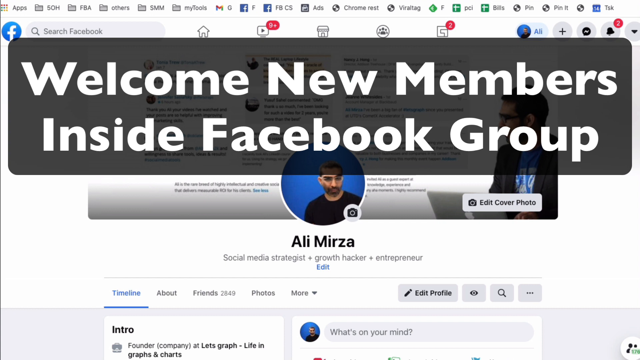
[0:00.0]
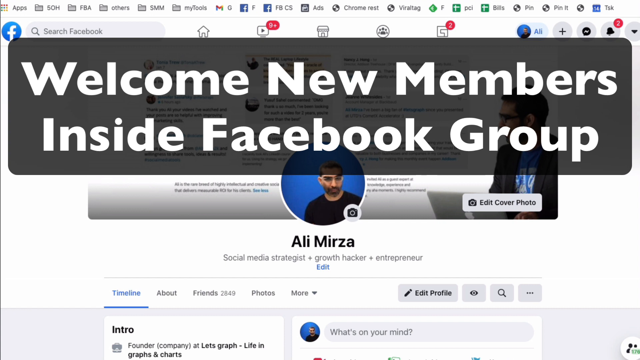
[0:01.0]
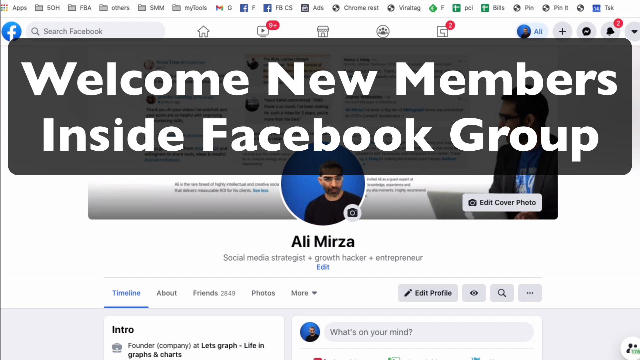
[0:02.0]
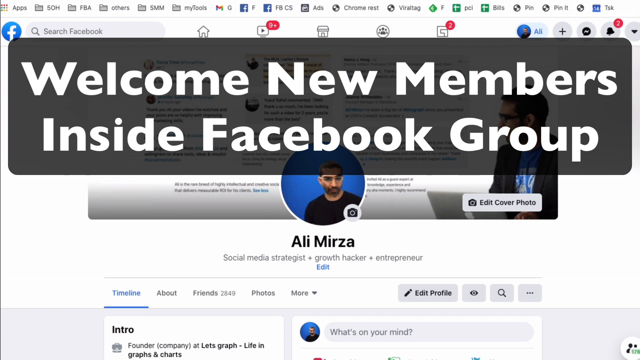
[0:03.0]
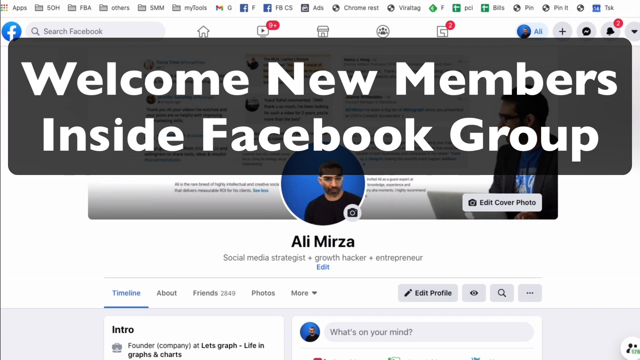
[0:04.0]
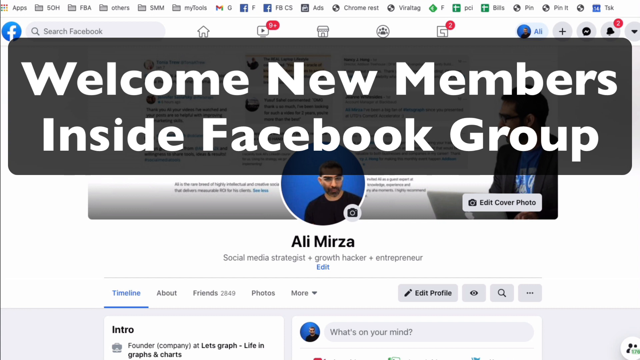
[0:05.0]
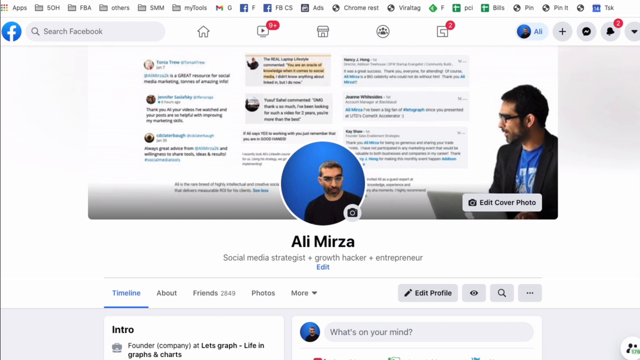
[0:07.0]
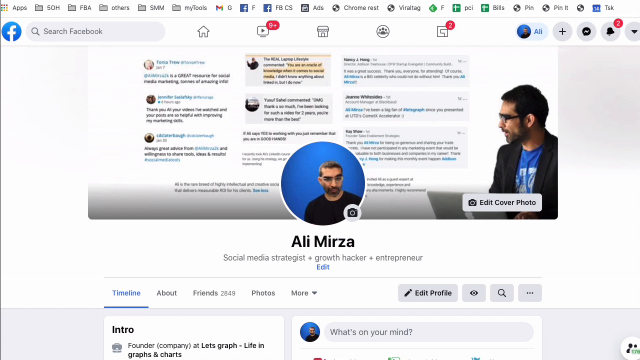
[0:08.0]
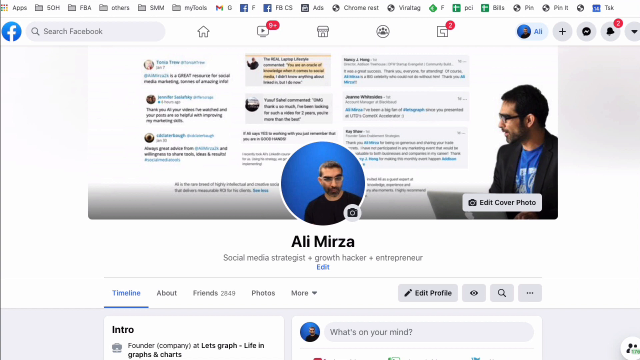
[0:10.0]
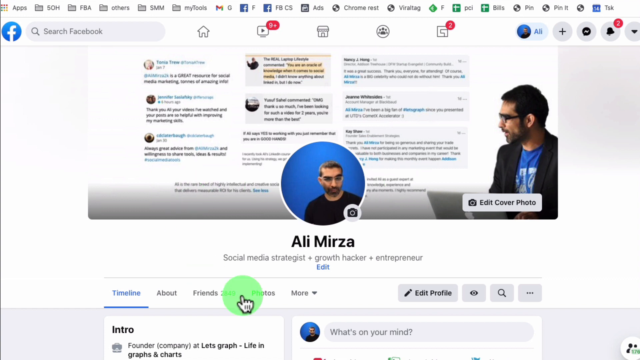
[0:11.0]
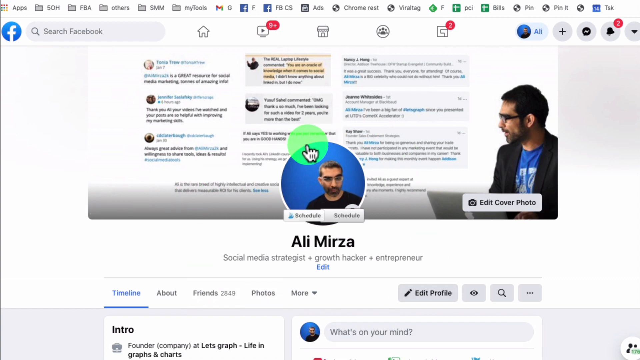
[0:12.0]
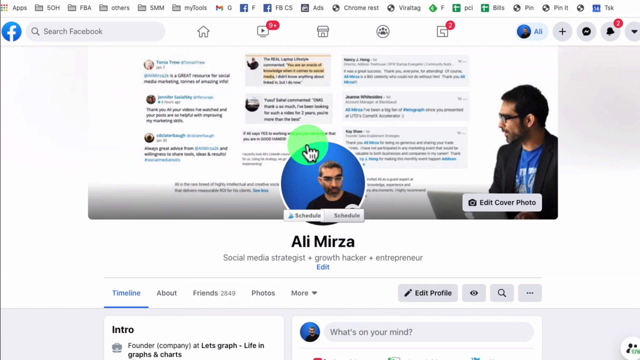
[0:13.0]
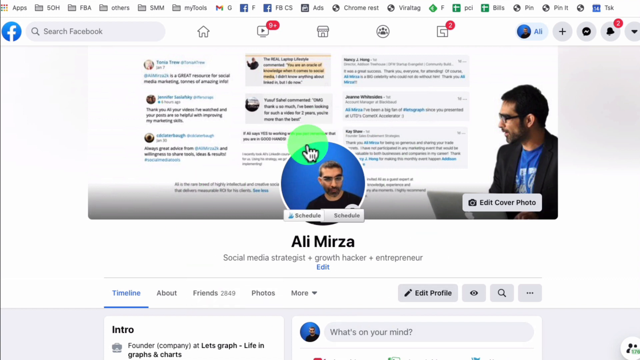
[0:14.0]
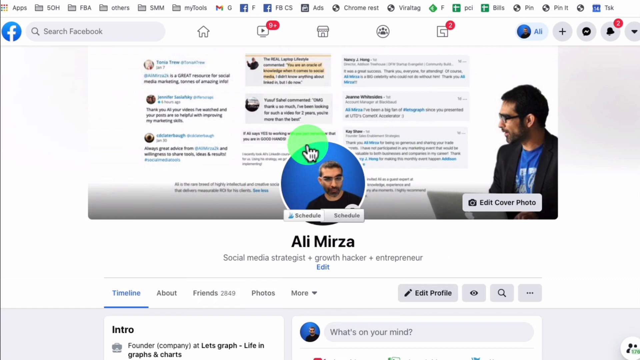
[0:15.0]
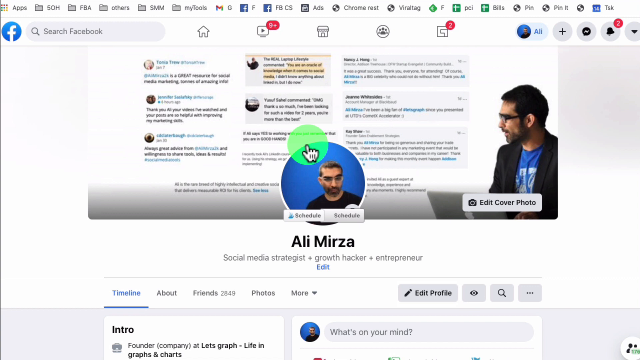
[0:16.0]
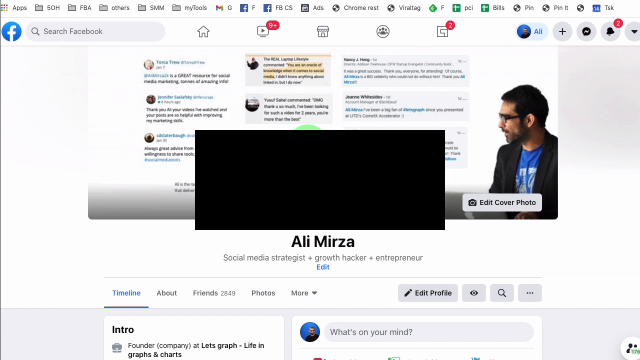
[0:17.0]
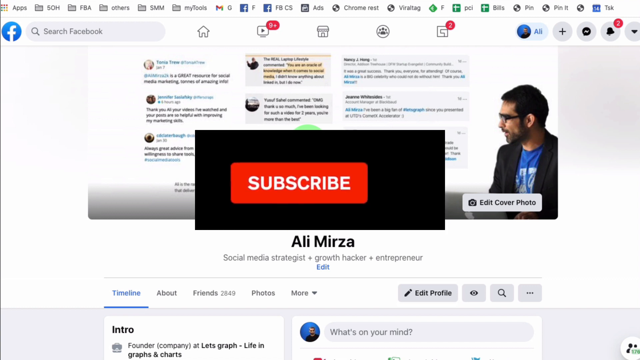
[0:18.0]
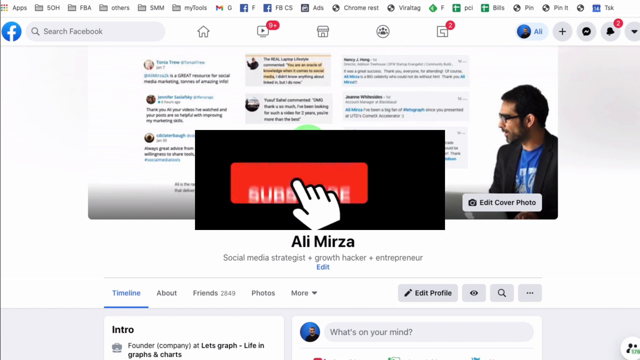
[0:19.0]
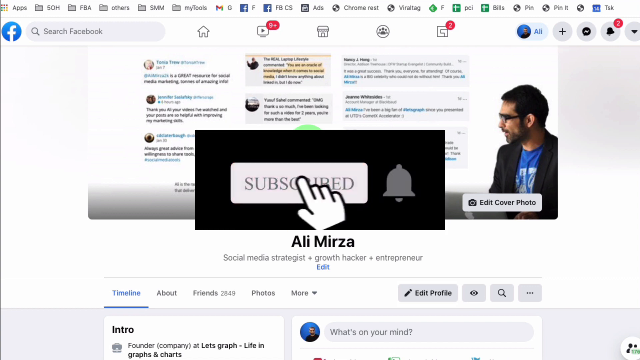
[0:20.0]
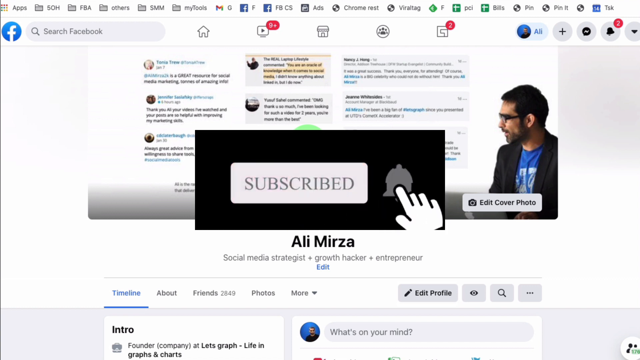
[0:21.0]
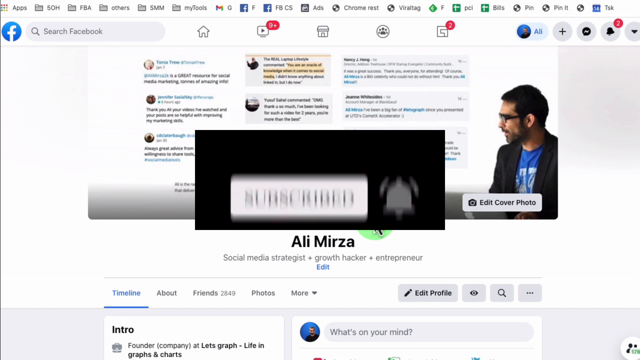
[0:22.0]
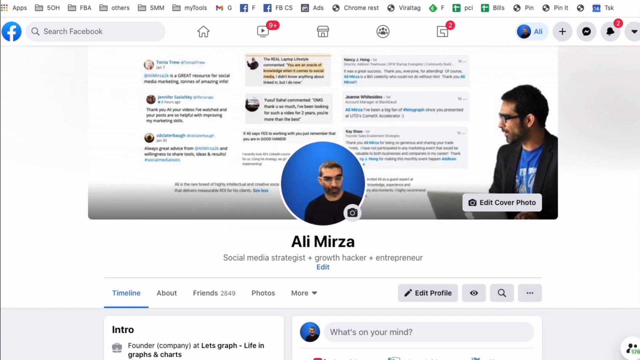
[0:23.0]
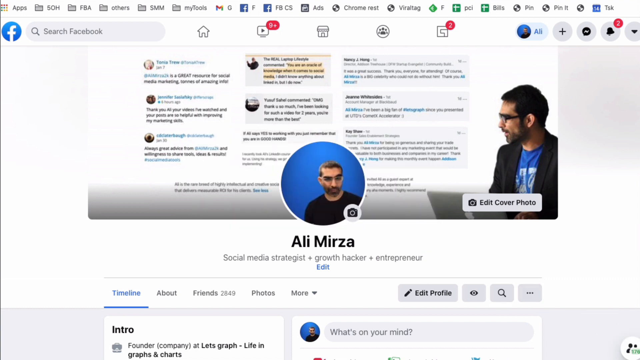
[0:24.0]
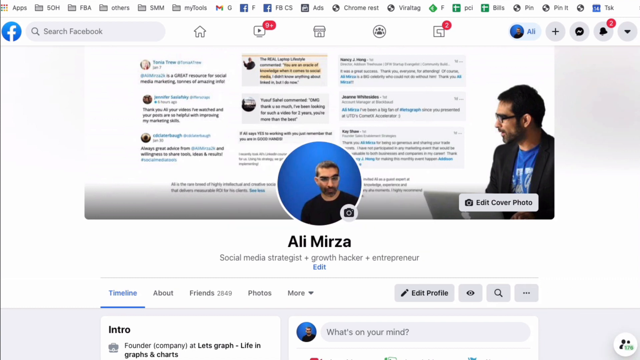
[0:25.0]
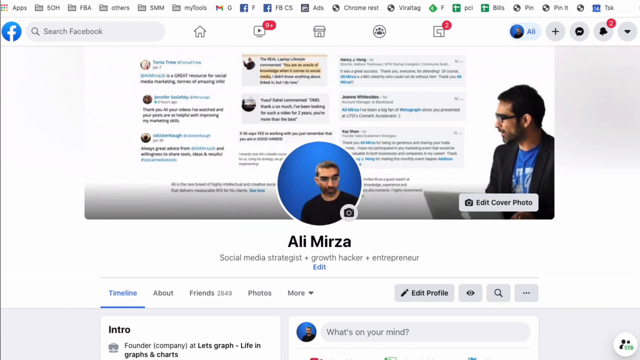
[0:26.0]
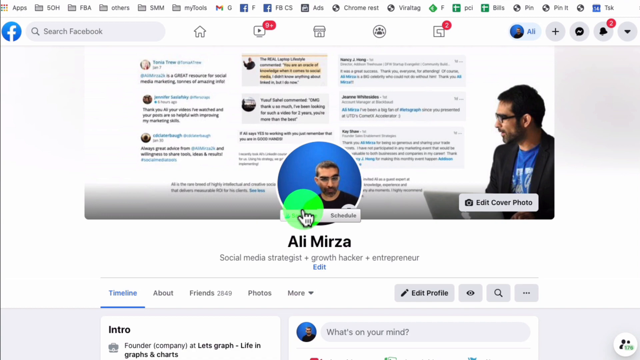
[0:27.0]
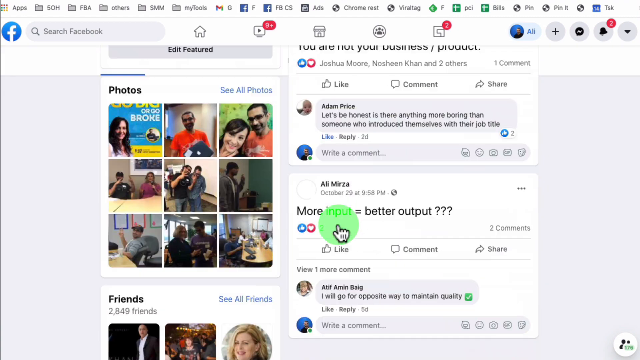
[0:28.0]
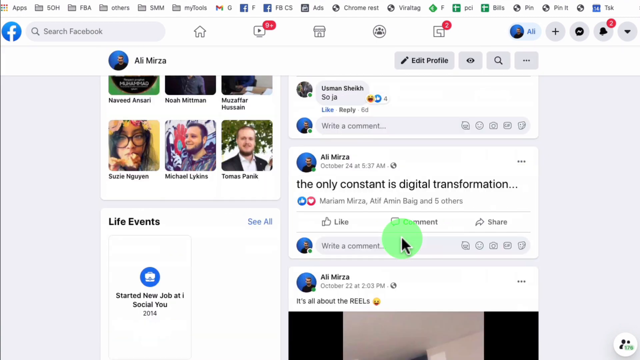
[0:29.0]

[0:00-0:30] A Facebook page shows "welcome new members" to a Facebook group, and there is an option to subscribe. Various pages pop up on this page. There is a picture of a man wearing glasses, a blue t-shirt and a black jacket. Another picture, taken against a blue background, shows him wearing only a black t-shirt. The pages are scrolled down, and other pages come up with names; this page is for a person named Almeza, the owner of the group.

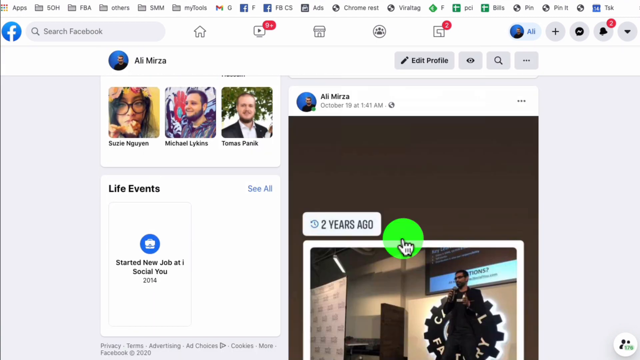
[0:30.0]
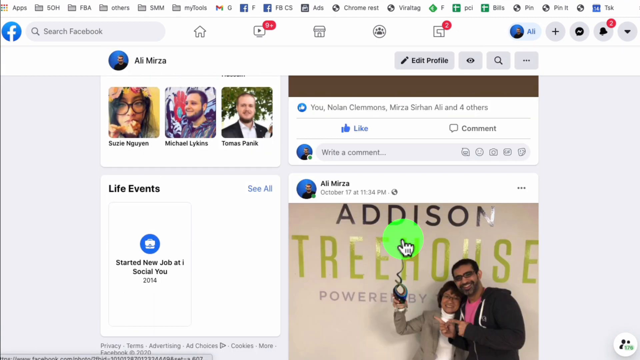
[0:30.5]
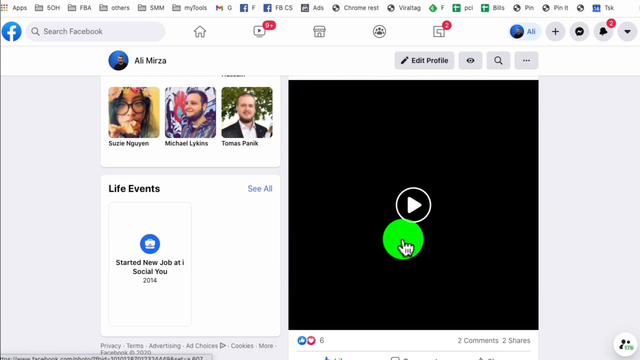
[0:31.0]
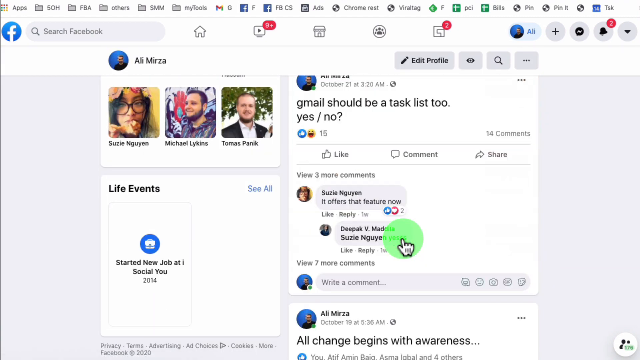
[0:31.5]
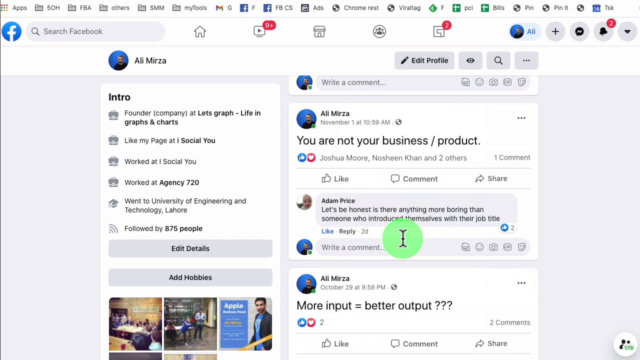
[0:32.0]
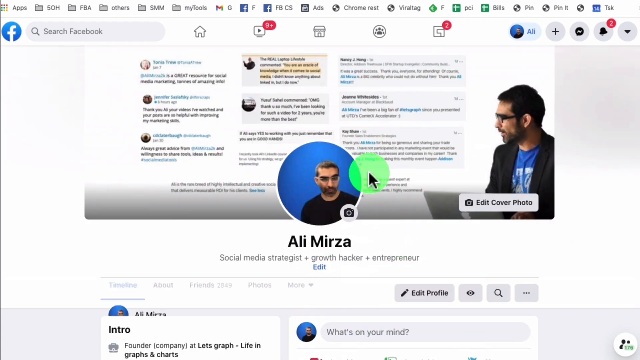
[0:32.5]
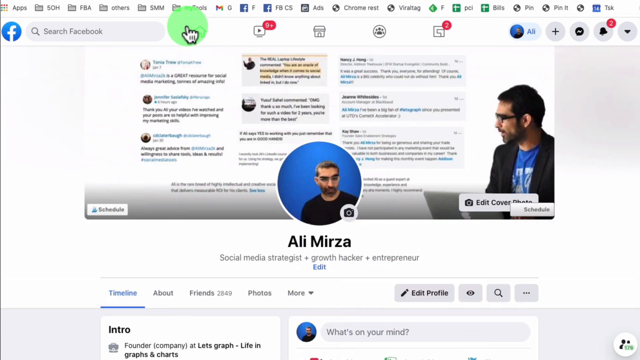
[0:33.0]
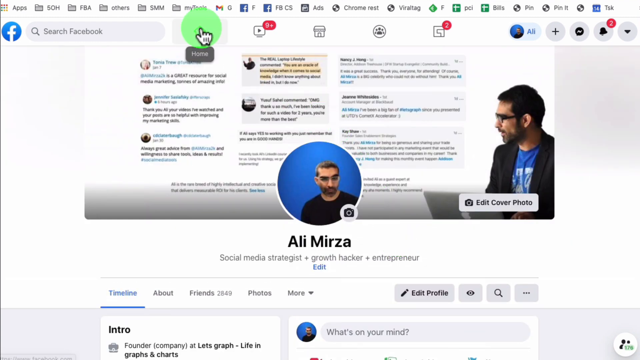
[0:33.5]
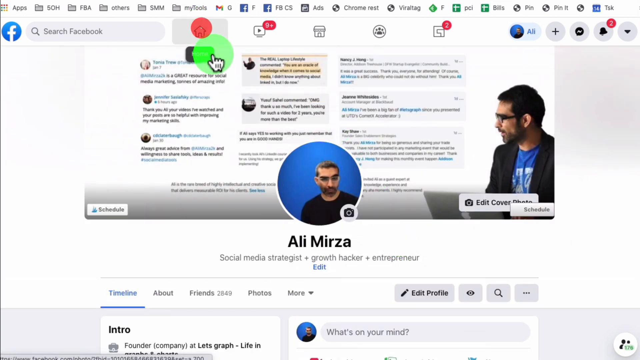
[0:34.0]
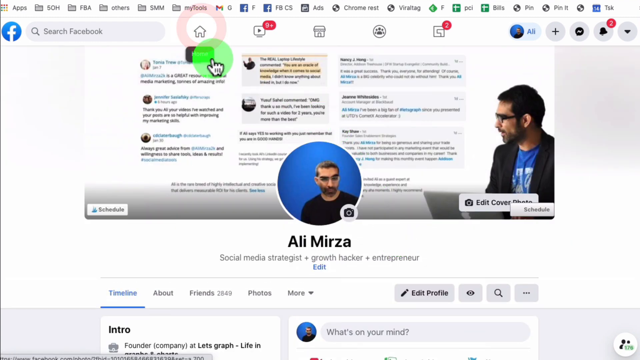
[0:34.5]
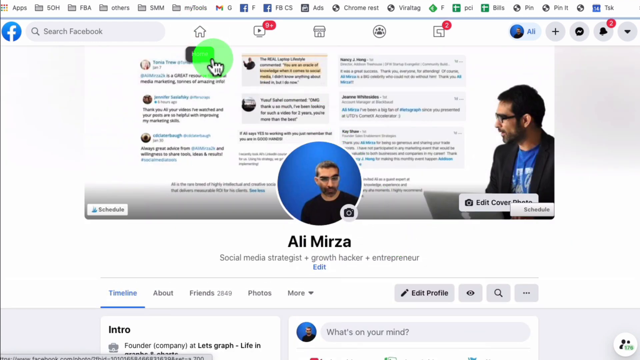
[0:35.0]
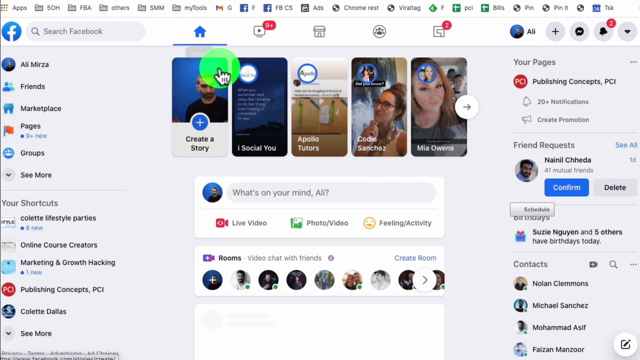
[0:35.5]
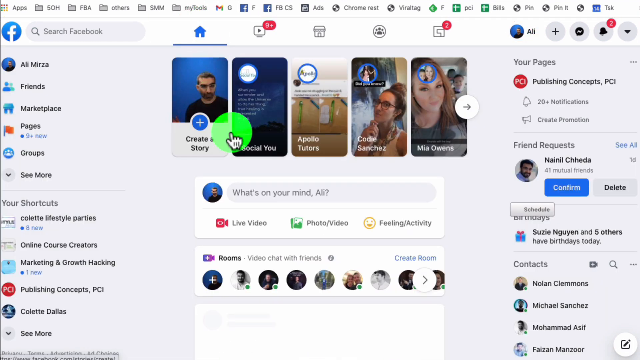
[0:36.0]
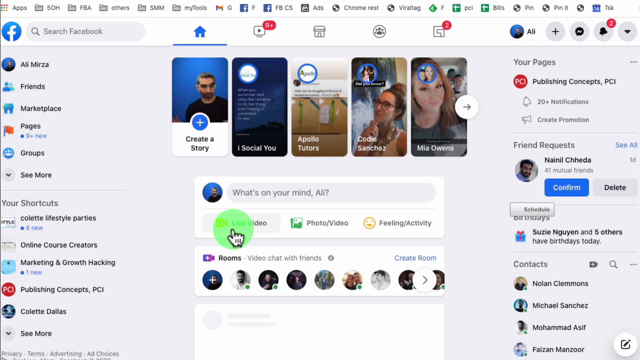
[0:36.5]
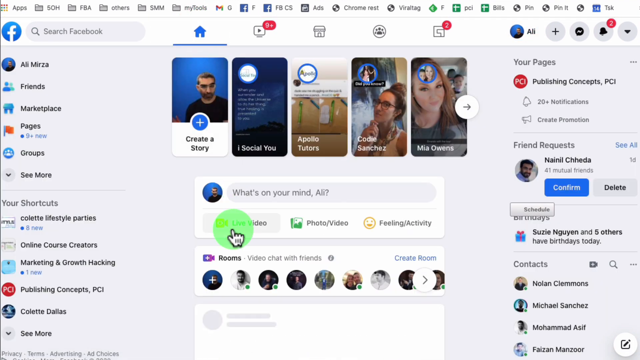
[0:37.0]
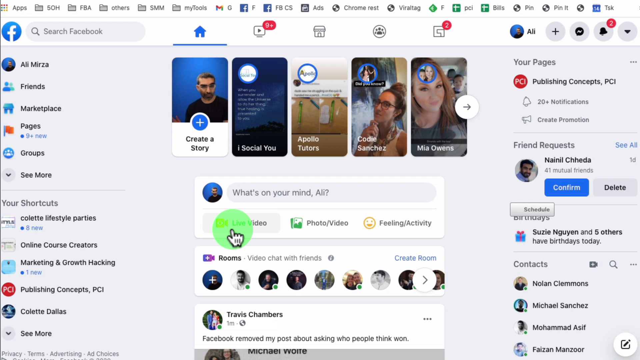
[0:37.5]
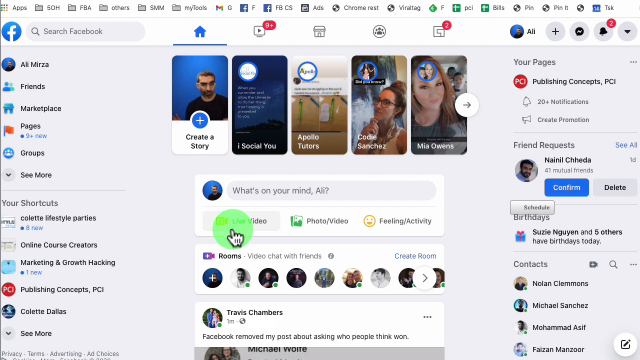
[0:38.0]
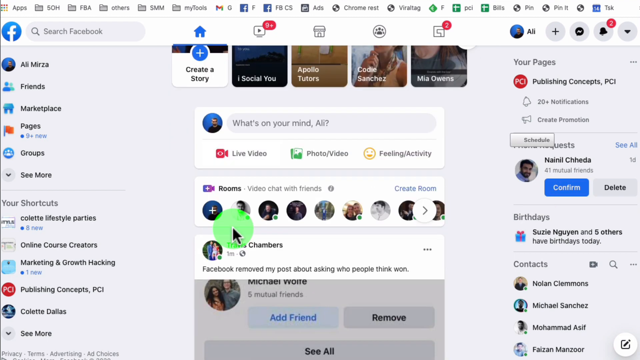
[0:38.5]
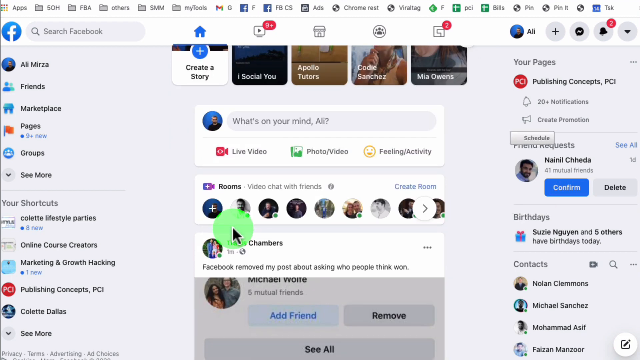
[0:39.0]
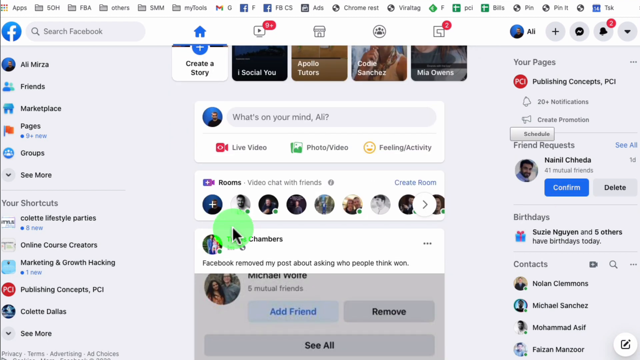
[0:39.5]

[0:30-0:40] The page shows people who have subscribed to the group, and various people pop up on the menu and on the Facebook page, with their names written beneath as they appear. The owner of the page, the man wearing glasses, a blue t-shirt and a black jacket, is also on the page.